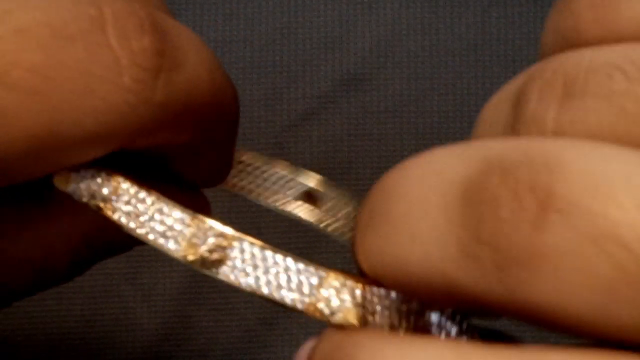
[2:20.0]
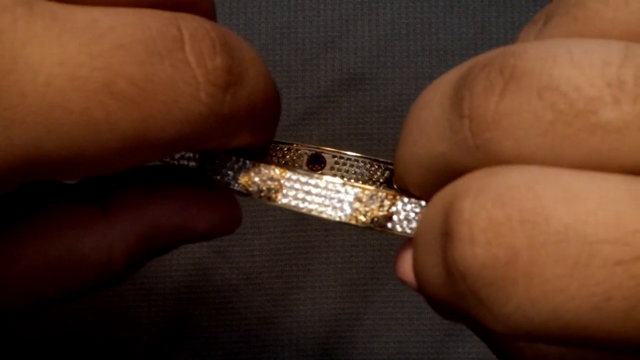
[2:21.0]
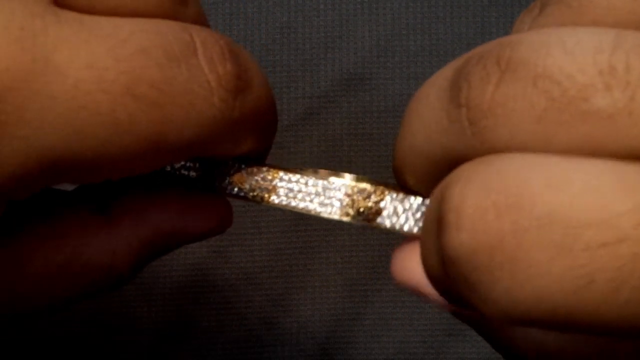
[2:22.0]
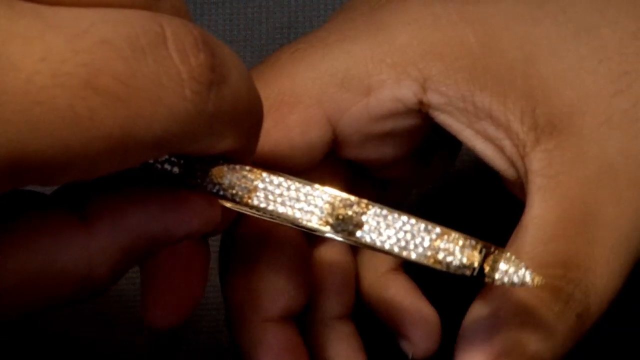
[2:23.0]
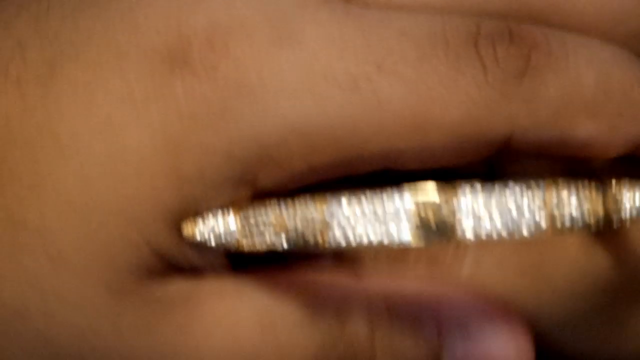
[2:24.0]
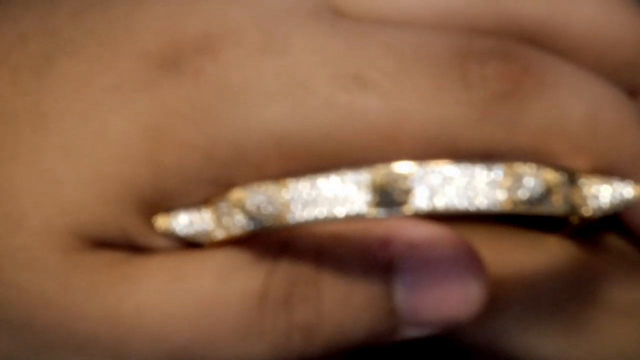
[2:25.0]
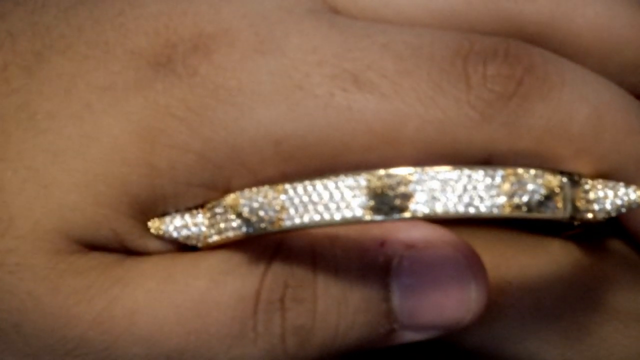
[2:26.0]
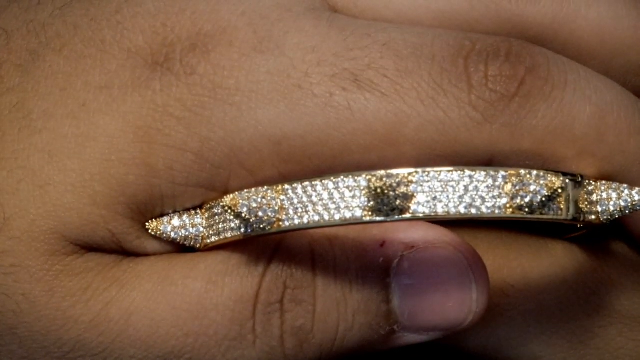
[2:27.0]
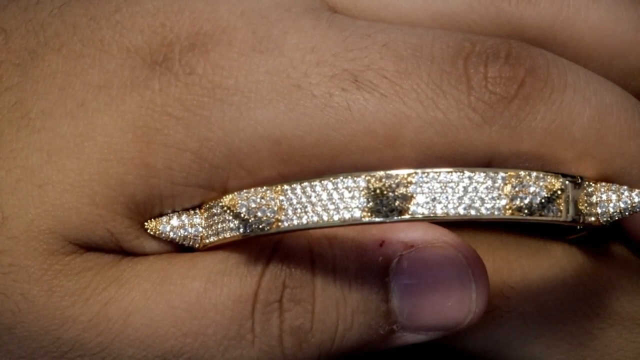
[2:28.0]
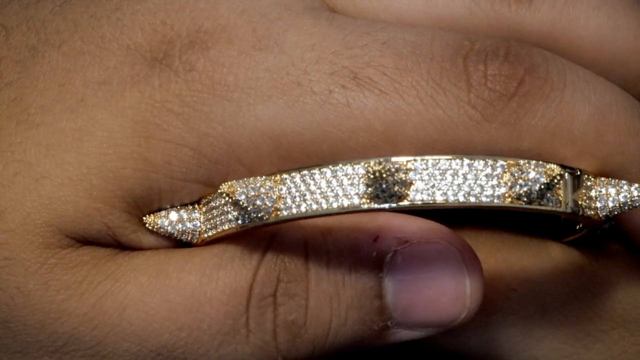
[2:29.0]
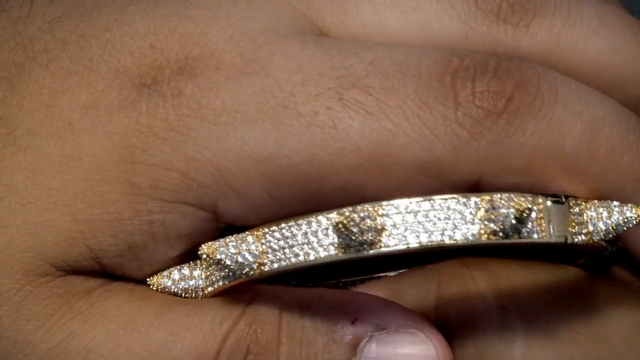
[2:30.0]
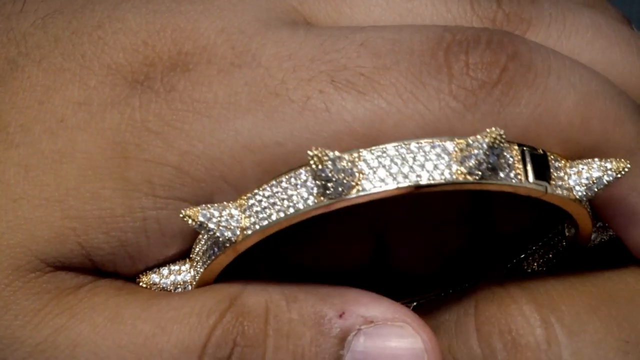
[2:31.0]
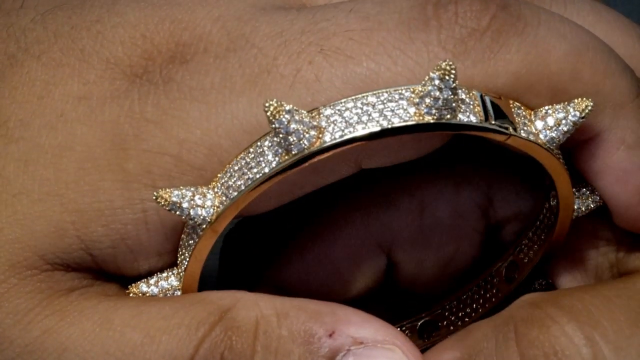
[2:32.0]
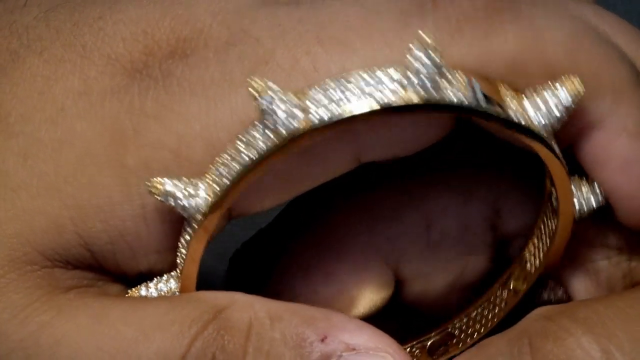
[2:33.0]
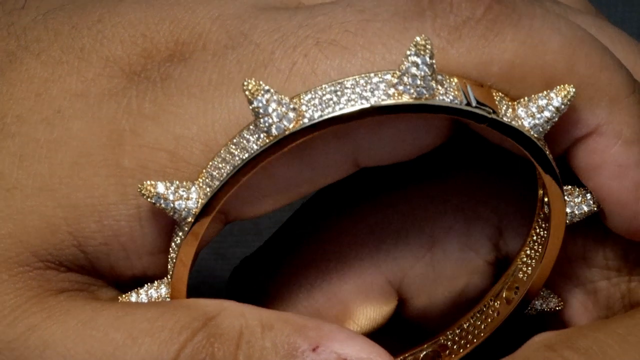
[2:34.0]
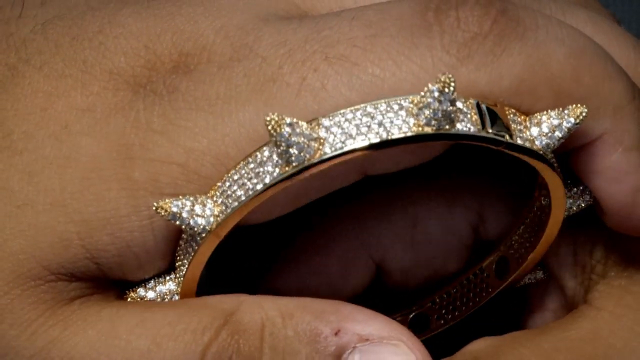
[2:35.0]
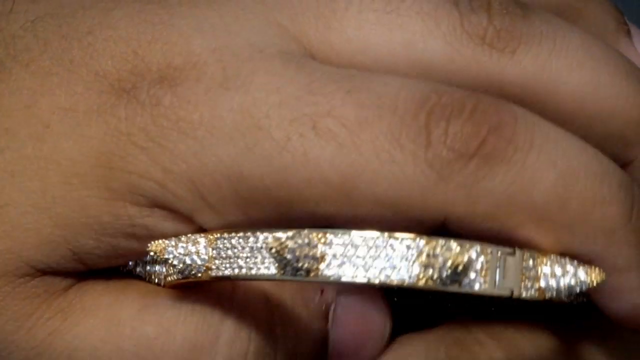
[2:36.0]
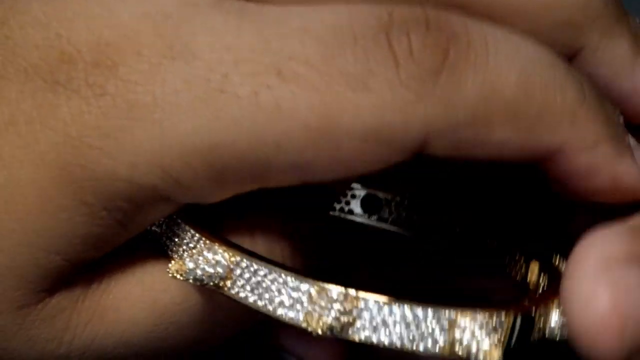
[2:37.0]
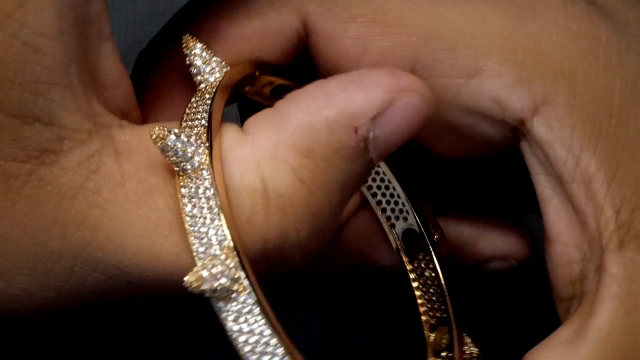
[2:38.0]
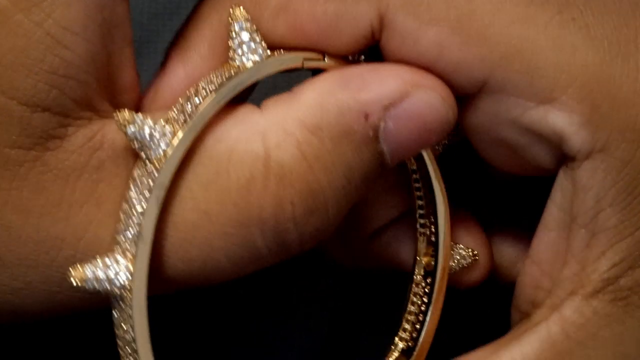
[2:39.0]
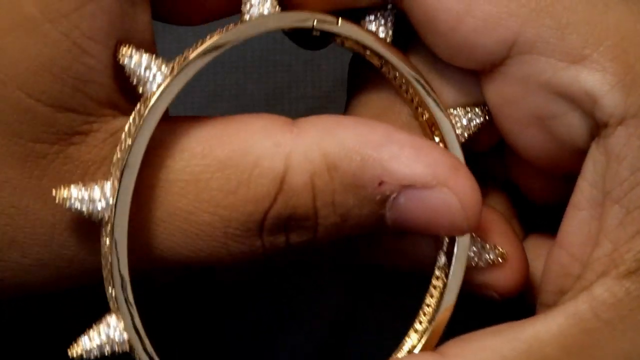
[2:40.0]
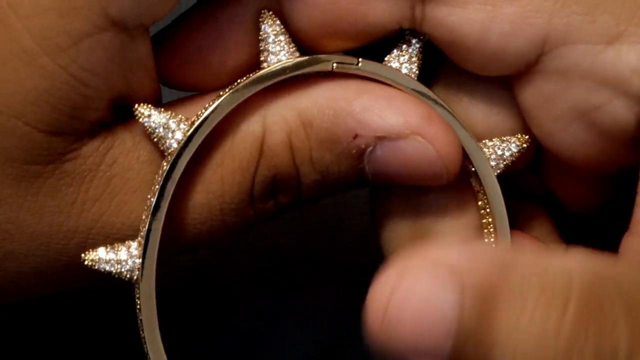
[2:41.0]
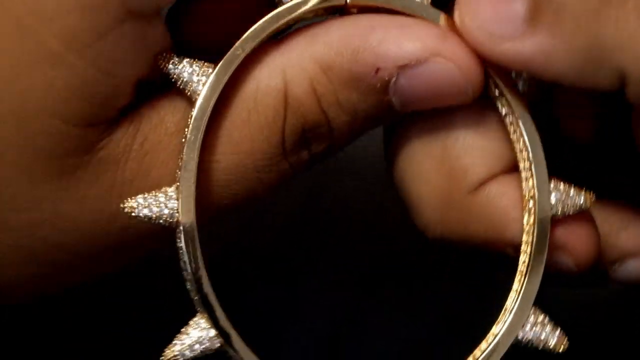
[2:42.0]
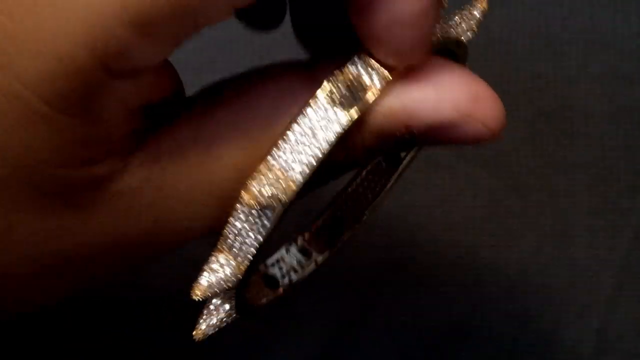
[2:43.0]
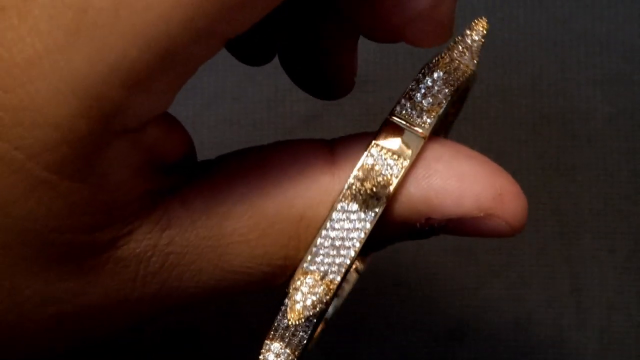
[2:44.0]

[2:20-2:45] He closes the wristband, leaving just a little piece of it showing. He plays with it, moving it everywhere and touching the sharp things on the outside. He keeps moving it and checking it, looking over every corner of it, and keeps holding the wristband.